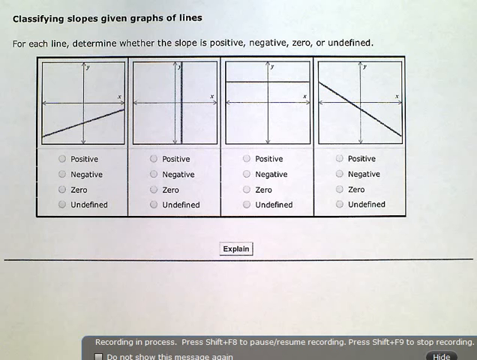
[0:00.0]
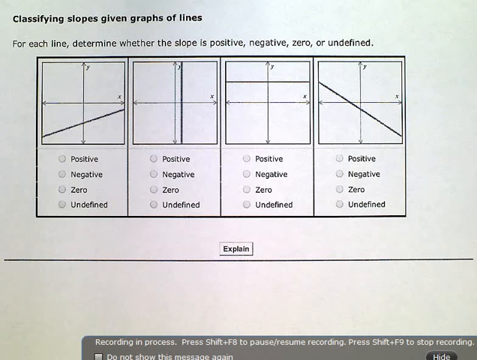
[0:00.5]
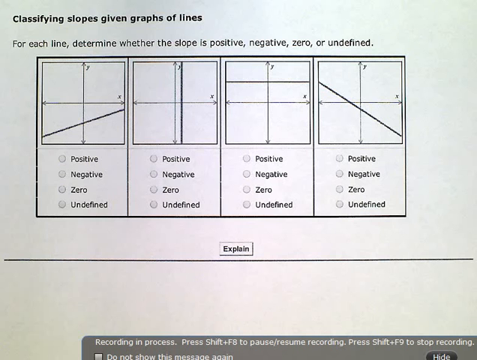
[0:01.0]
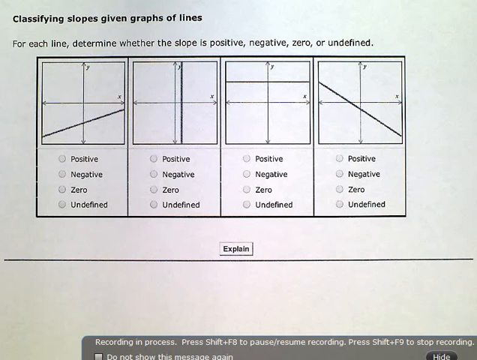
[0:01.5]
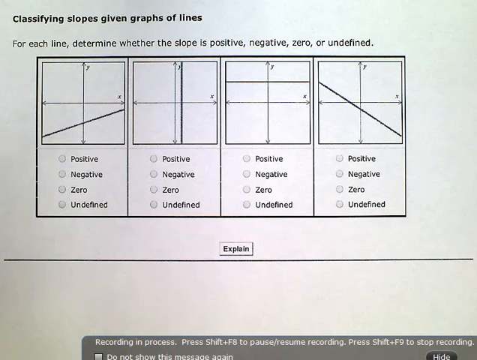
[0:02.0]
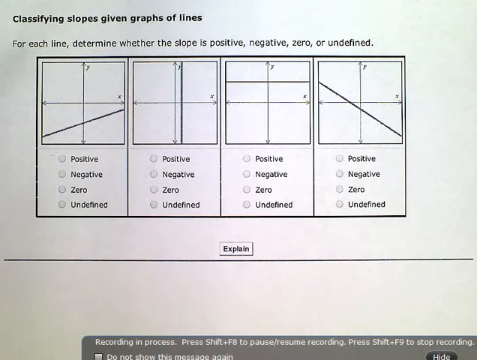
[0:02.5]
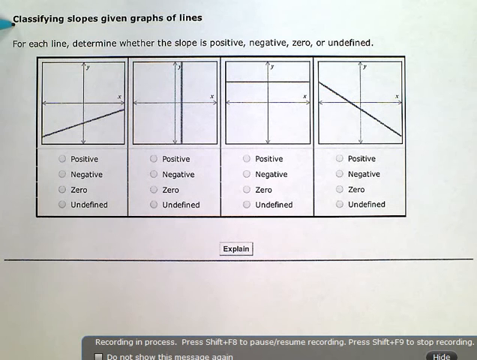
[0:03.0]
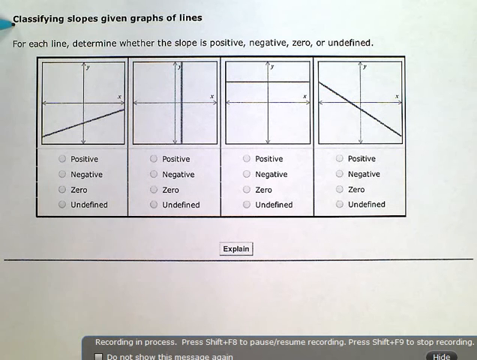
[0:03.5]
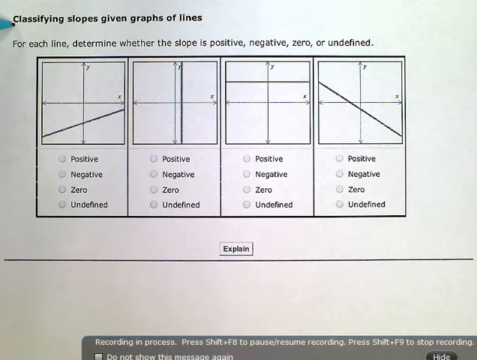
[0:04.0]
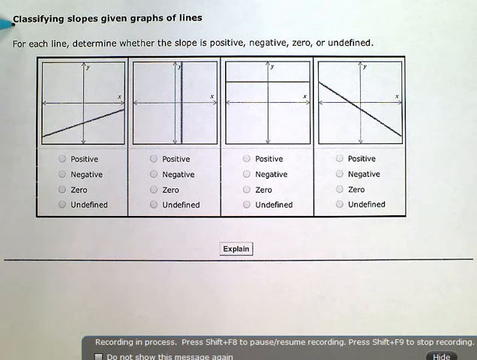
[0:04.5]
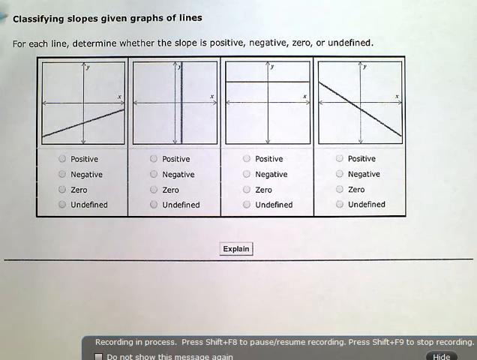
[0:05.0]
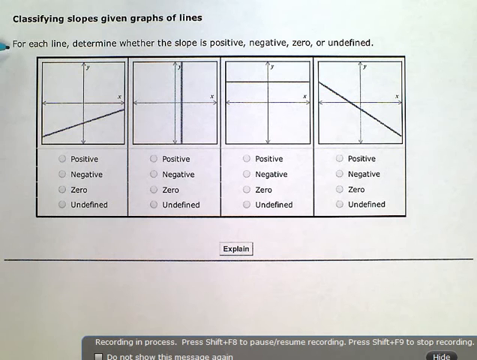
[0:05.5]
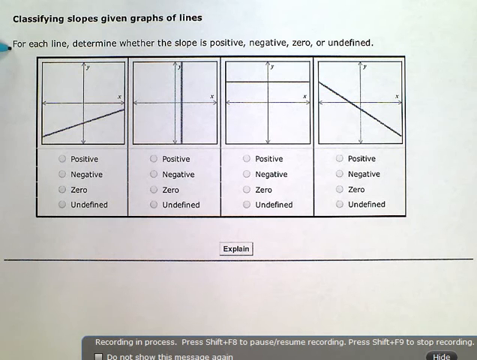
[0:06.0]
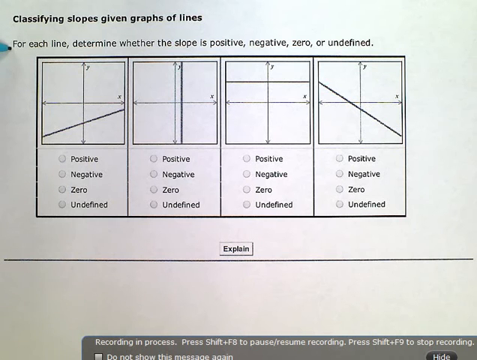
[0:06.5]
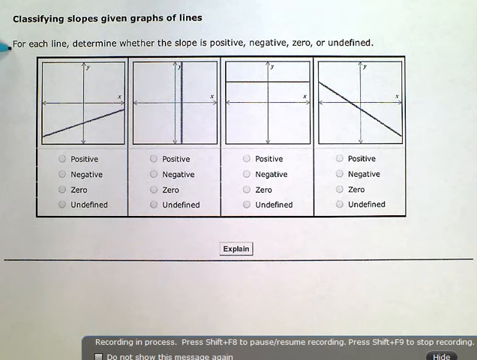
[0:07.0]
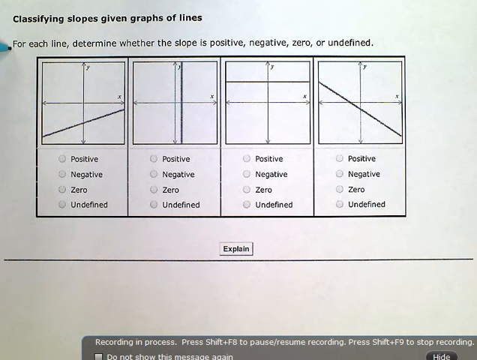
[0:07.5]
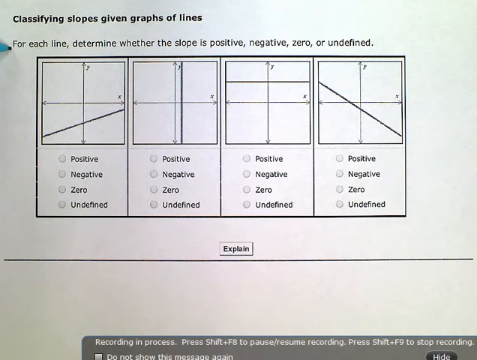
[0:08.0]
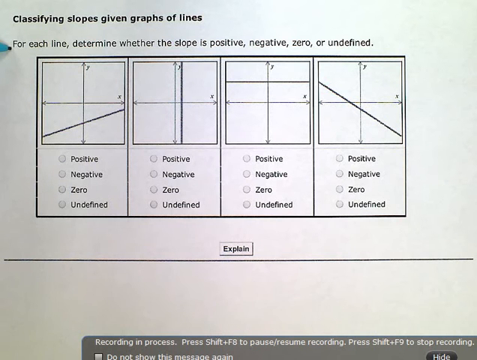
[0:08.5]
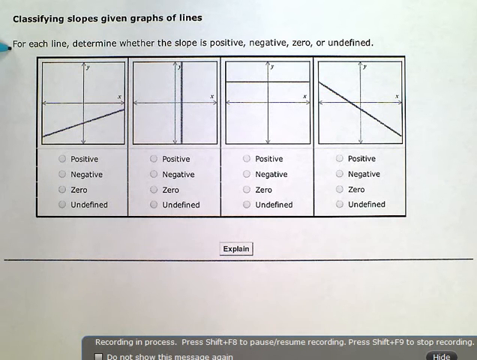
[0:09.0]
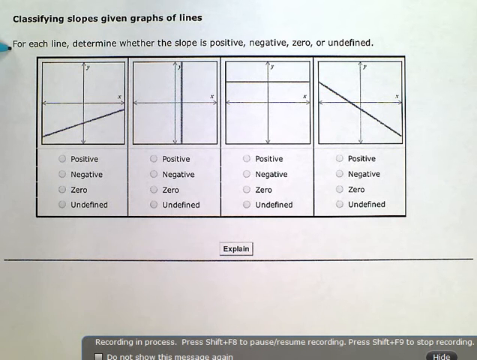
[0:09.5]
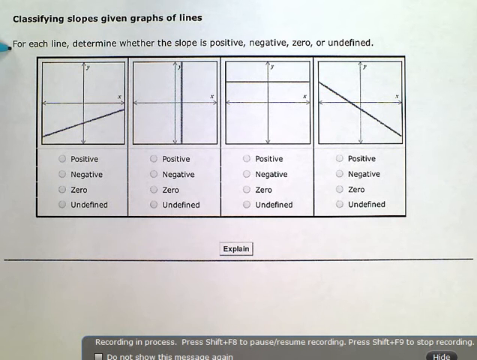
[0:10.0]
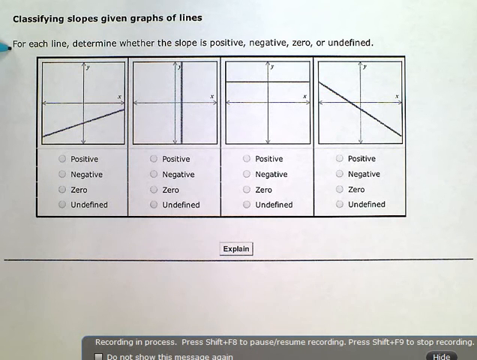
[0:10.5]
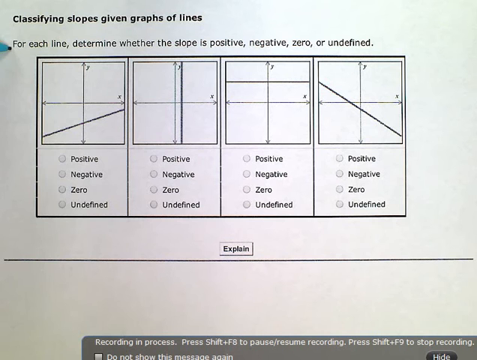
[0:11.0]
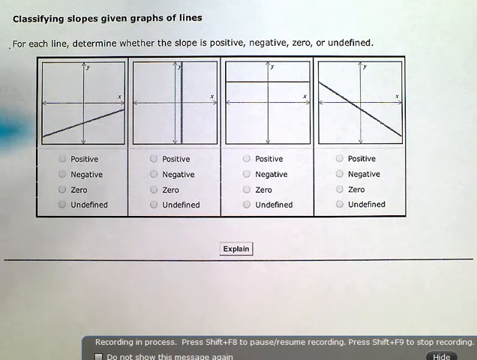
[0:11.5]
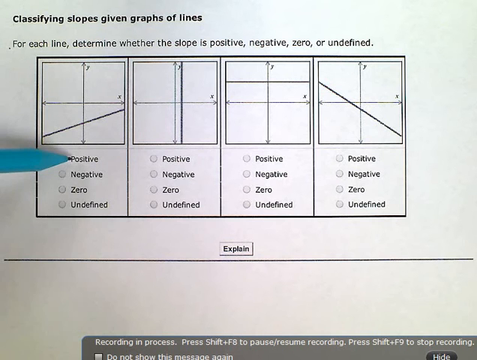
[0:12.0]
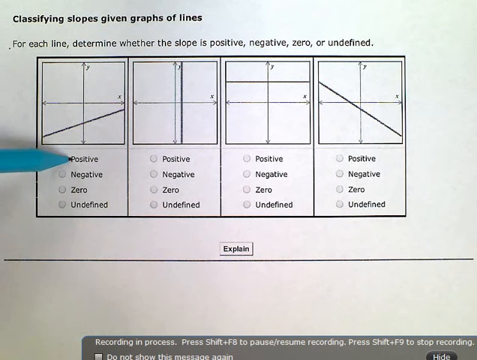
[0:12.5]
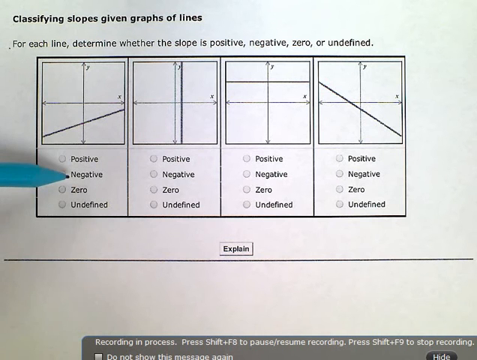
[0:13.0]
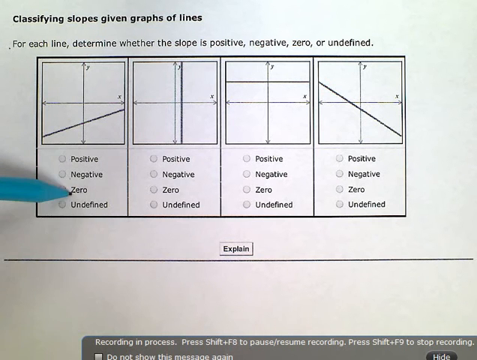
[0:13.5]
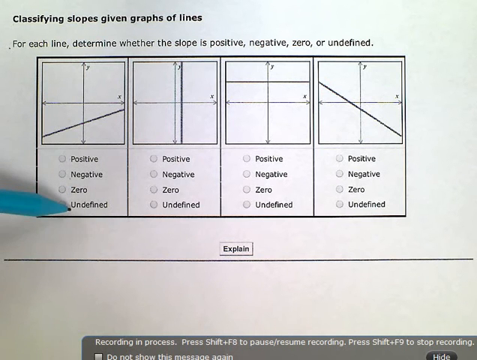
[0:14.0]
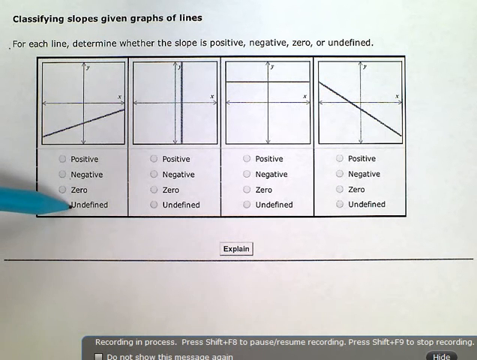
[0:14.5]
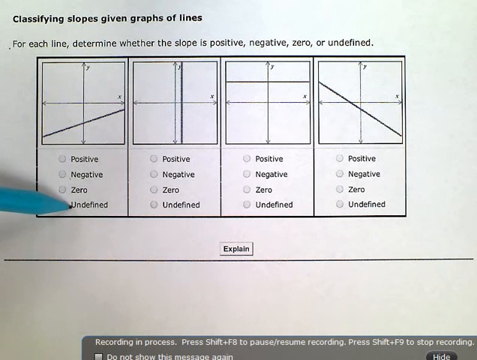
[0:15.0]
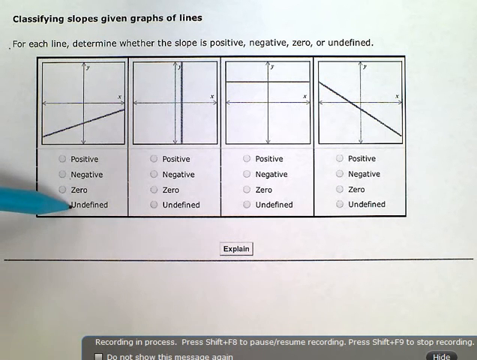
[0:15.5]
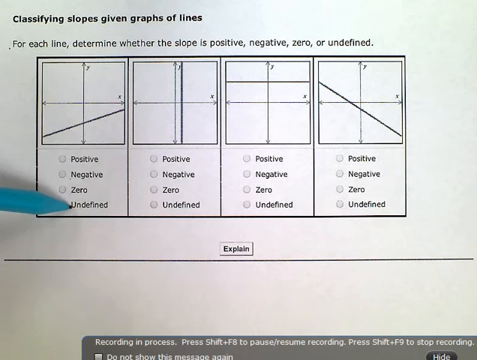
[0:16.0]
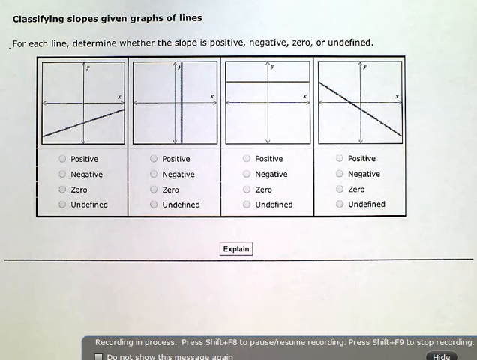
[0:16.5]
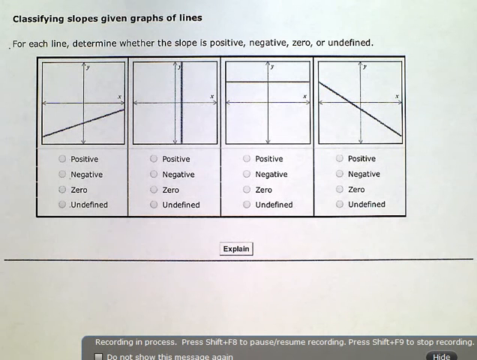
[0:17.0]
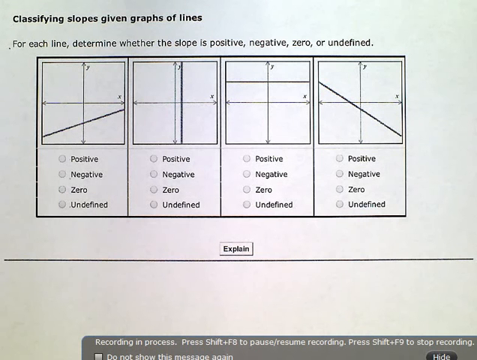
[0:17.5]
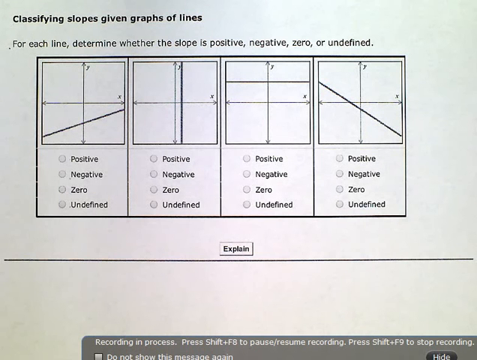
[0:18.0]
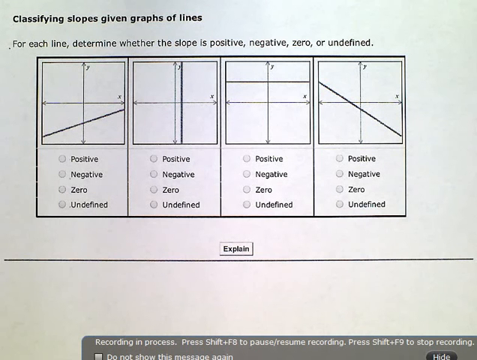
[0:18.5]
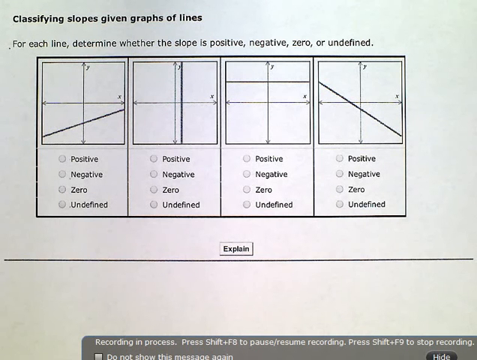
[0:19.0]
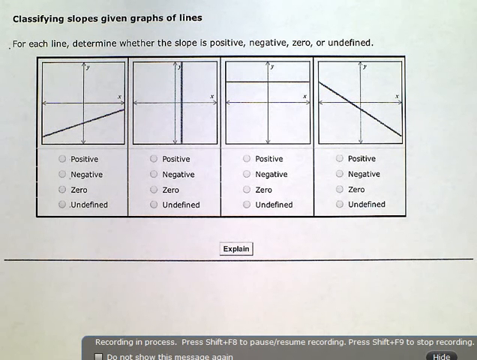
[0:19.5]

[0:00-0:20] A white page with lots of black writing on it reads "classifying slopes given graphs of lines. For each line determine whether the slope is positive, negative, zero or undefined." Below is a rectangular box divided into four equal sections. Each section holds a four-gridded square with a line going across it, and each box has a different line. In the first box the line goes from the bottom left quadrant to the top of the bottom right quadrant. In the second square a line goes straight down from top to bottom, covering the area to the left of the right quadrant and the bottom right quadrant. In the third box a perpendicular line goes across the top two squares. In the final section a line starts in the top left quadrant and ends in the bottom right quadrant.